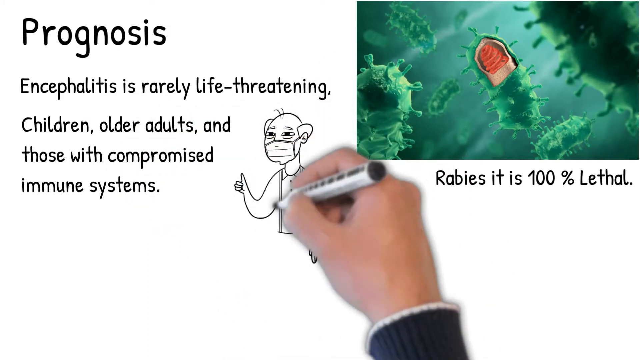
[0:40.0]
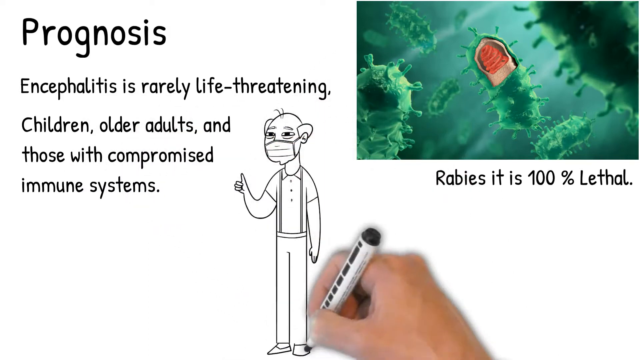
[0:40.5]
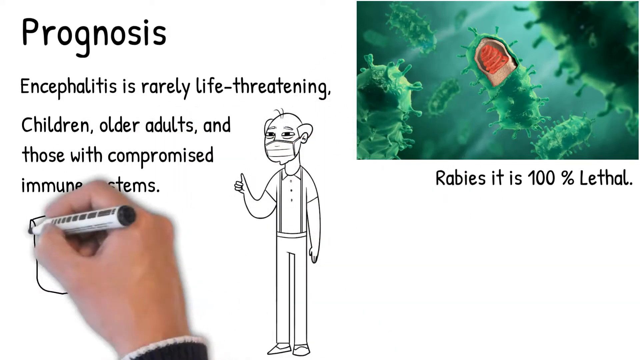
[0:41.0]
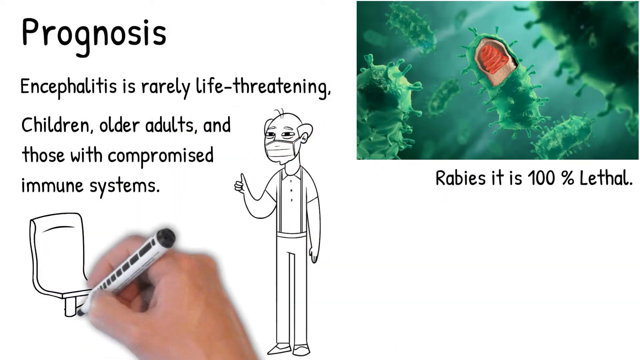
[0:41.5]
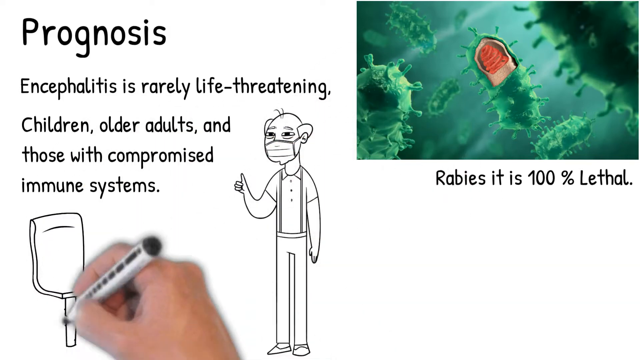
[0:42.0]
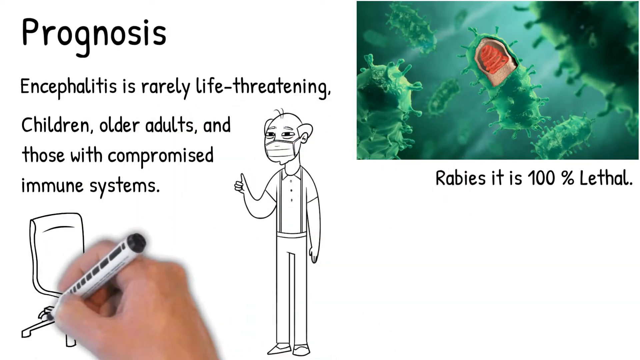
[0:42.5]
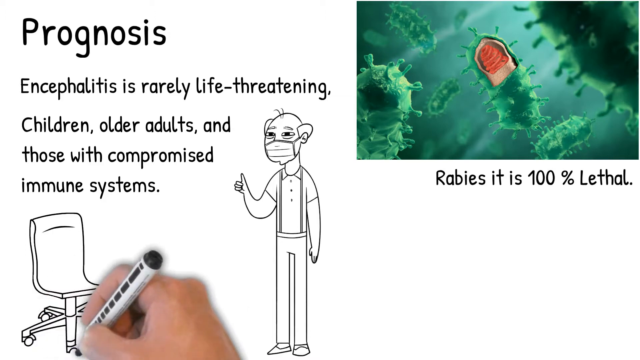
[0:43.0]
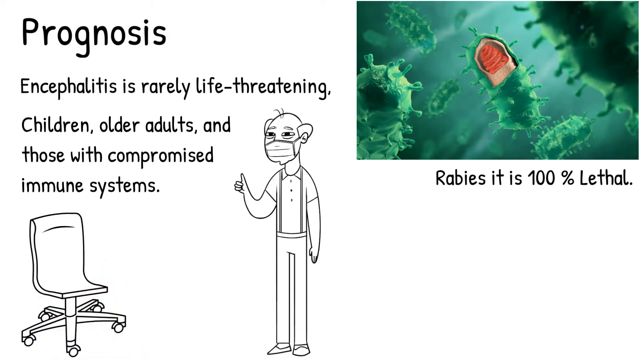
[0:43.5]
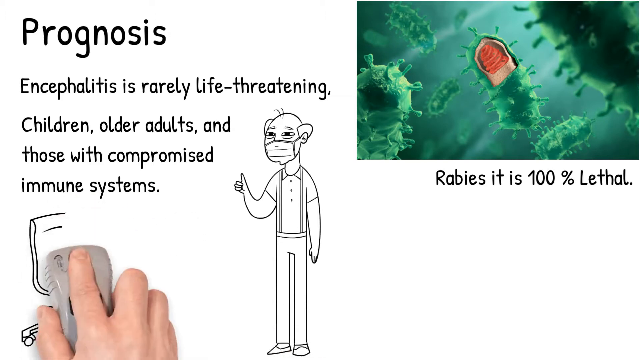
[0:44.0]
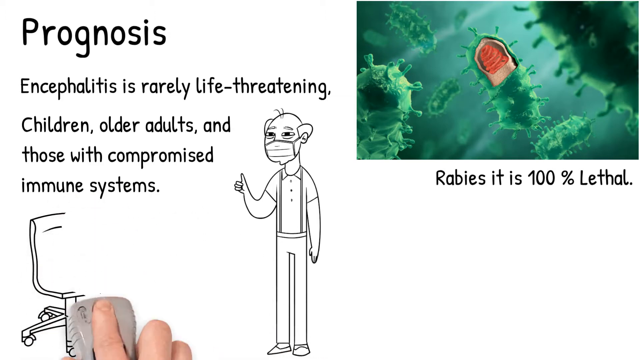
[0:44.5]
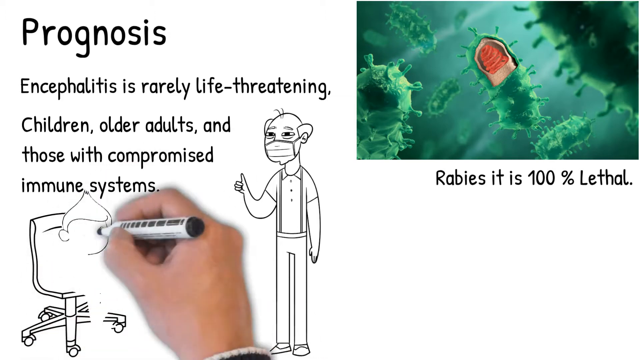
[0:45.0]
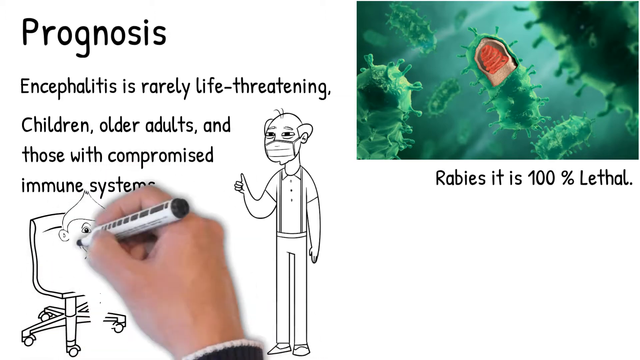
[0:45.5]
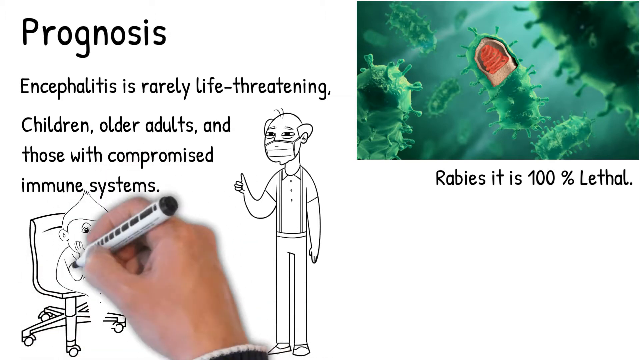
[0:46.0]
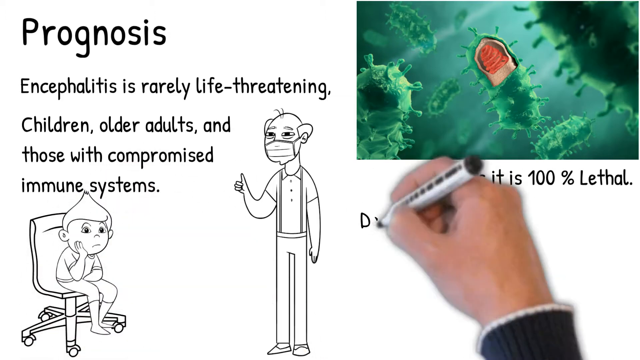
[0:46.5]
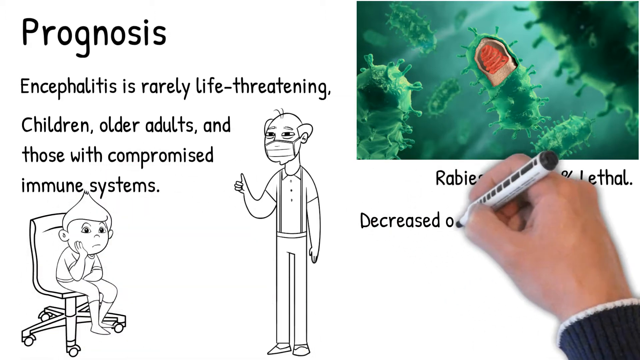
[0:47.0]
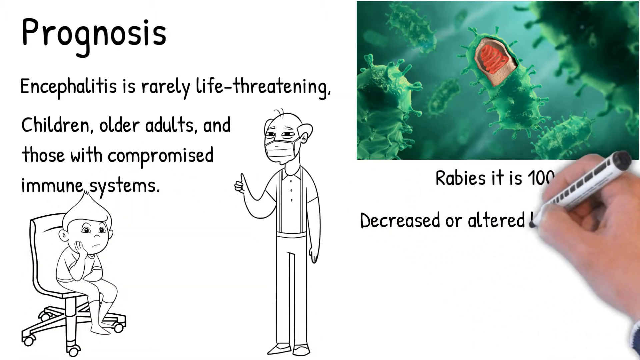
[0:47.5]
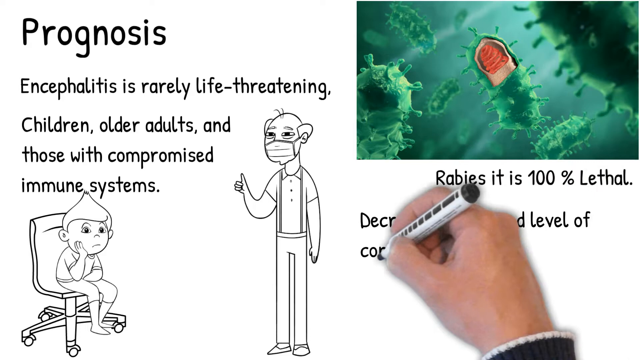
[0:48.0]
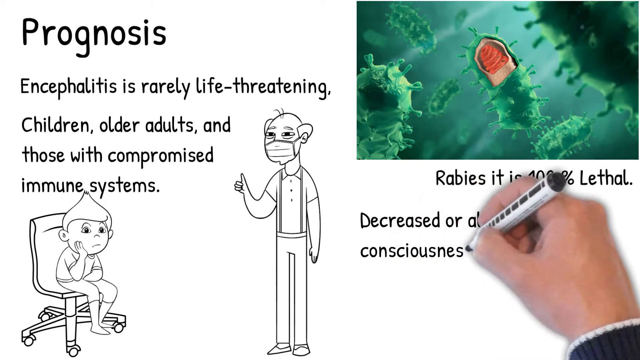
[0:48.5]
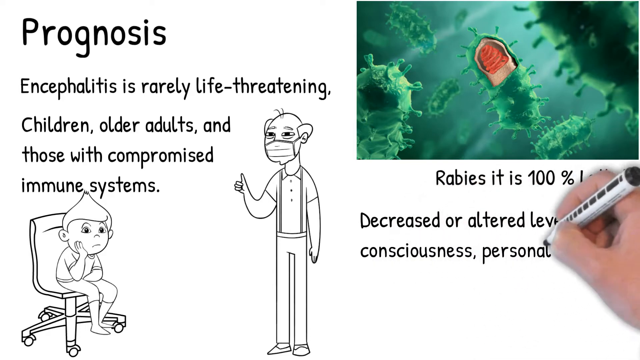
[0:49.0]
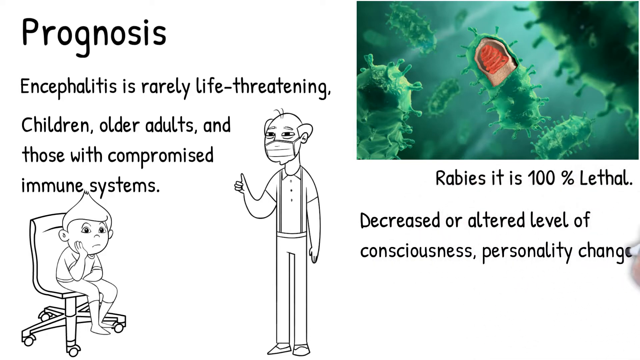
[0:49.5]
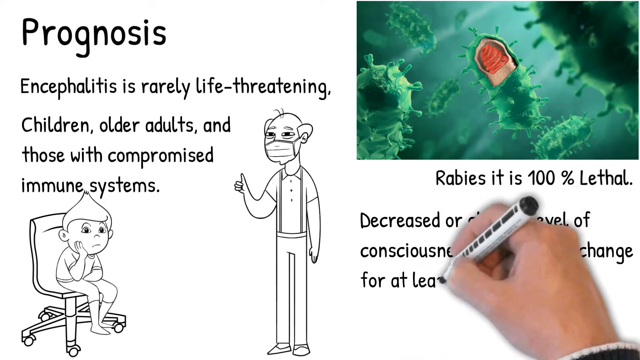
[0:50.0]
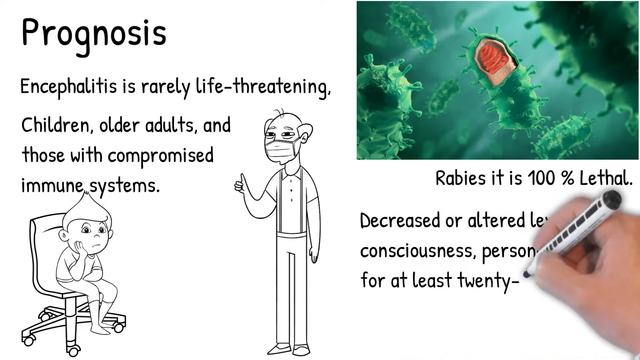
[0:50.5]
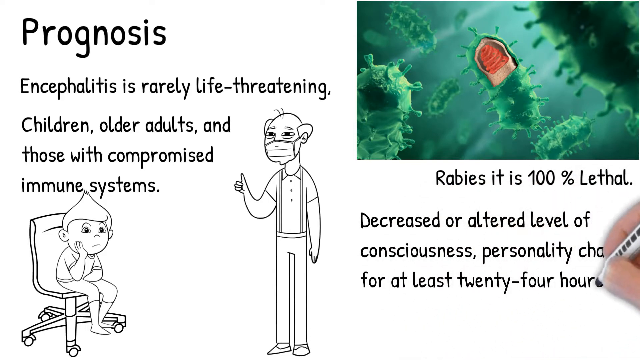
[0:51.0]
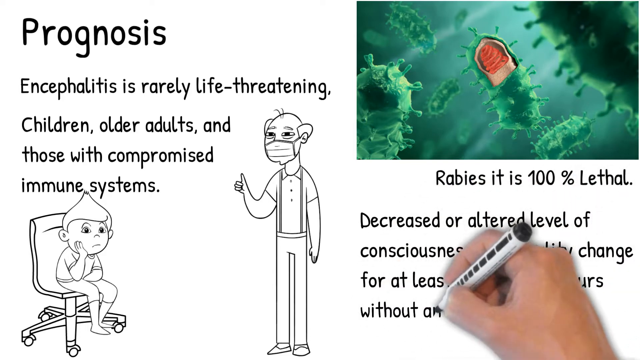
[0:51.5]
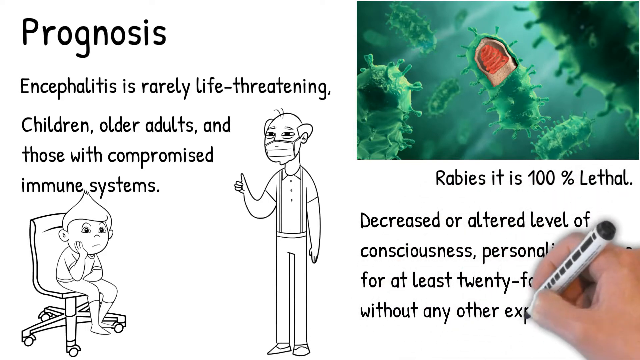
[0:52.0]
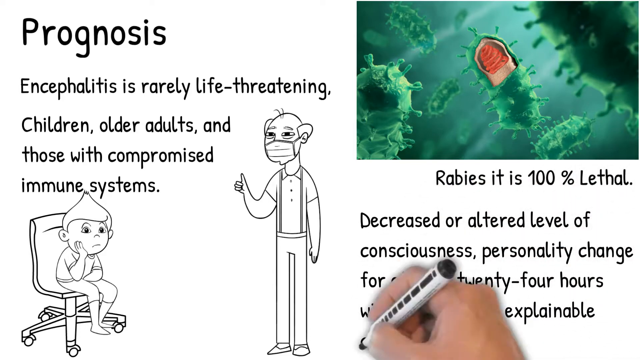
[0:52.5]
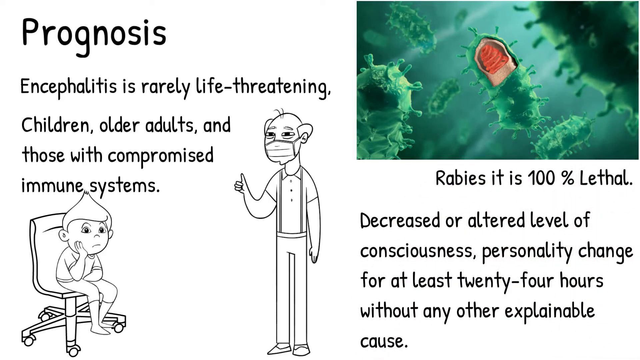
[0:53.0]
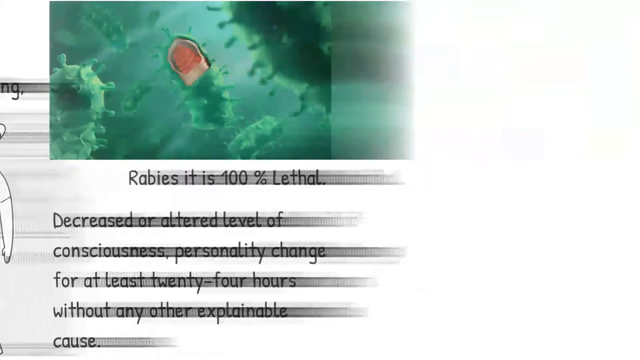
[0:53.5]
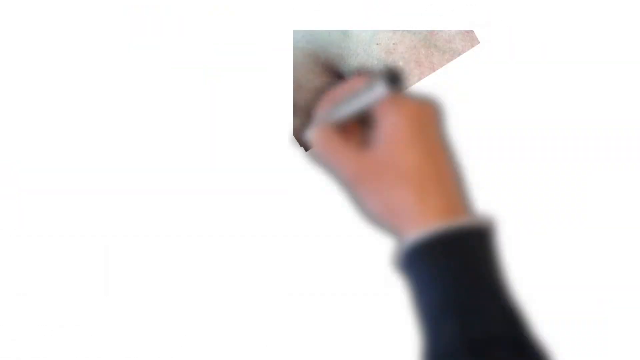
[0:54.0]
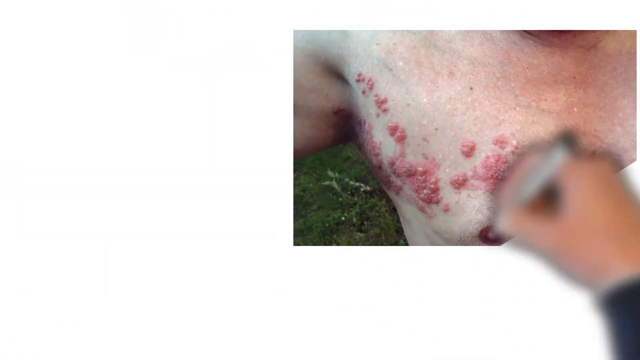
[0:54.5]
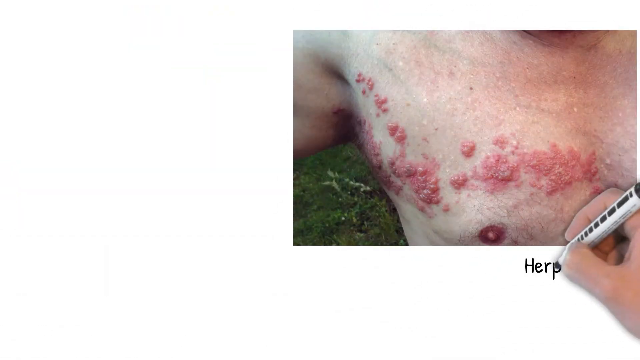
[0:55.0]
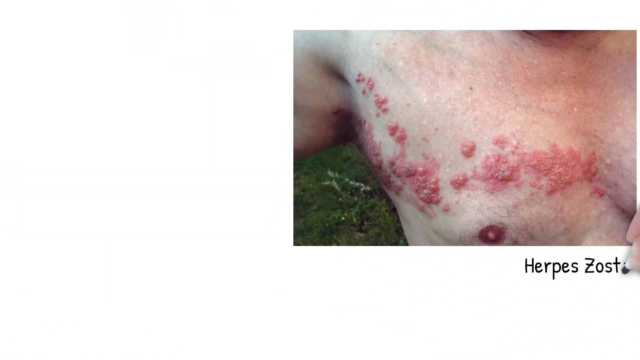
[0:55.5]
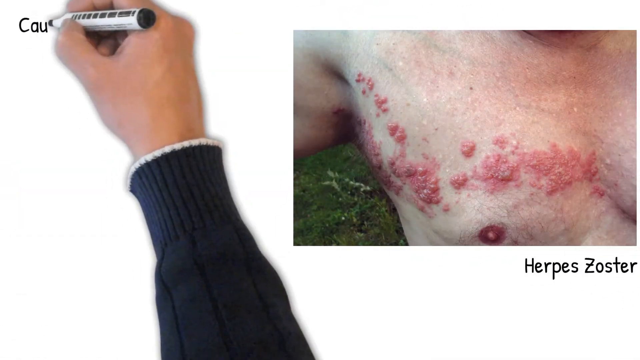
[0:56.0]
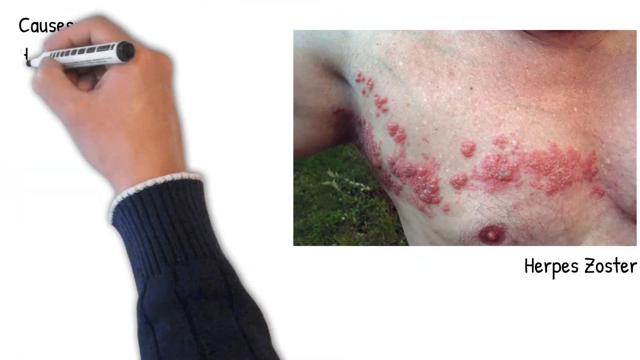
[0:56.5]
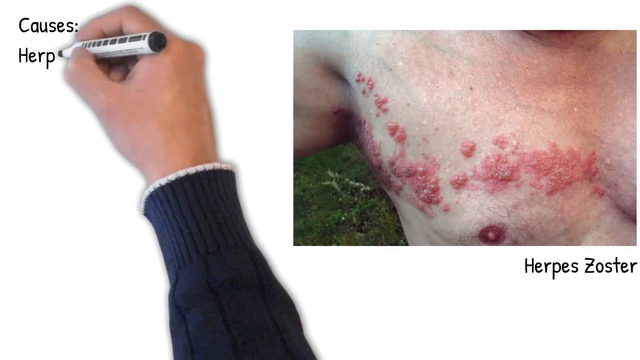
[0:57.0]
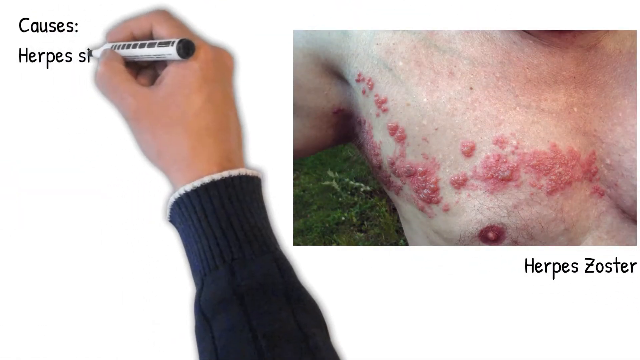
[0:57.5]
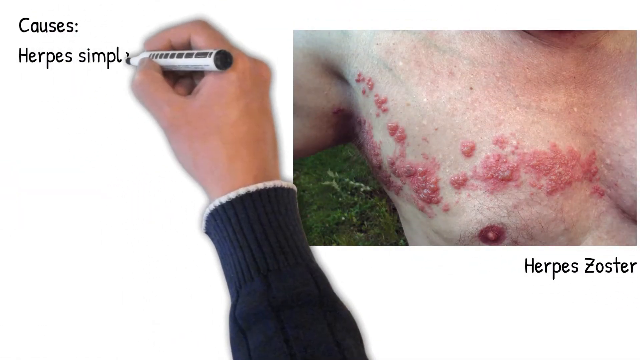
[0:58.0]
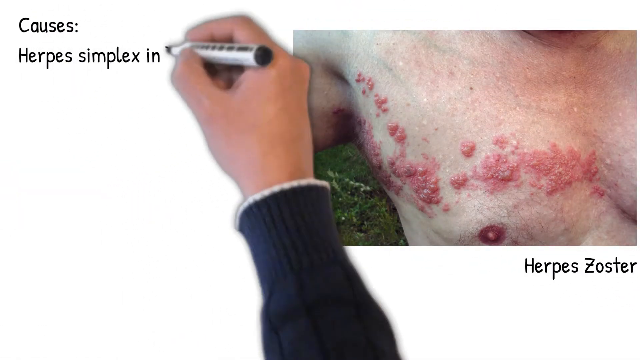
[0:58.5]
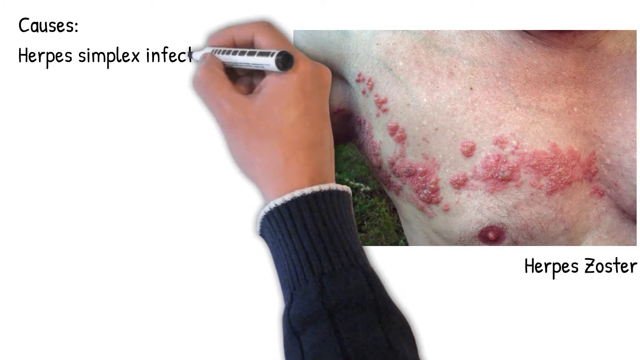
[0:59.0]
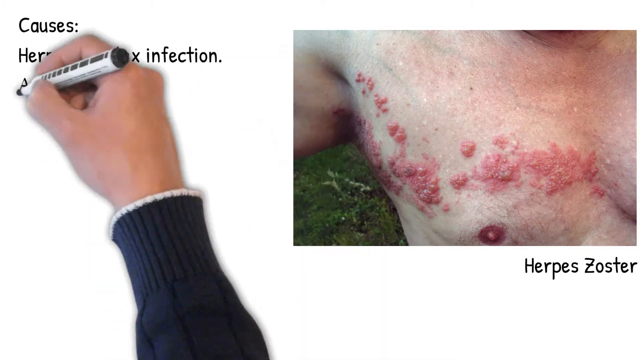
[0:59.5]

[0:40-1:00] A picture of somebody wearing a mask is drawn; the masked person looks to be a doctor. Notes mention a decreased or altered level of consciousness and a personality change. A small child is sitting in a chair, and the text says "personality change for at least 24 hours without any other explainable cause". Next comes a picture of a man's chest with lesions on it, with the text "herpes zoster, the causes of herpes simplex infection".